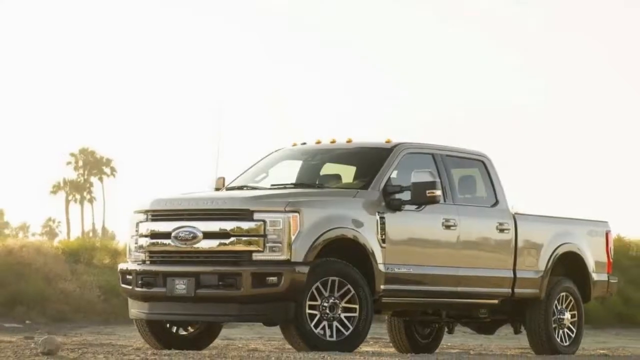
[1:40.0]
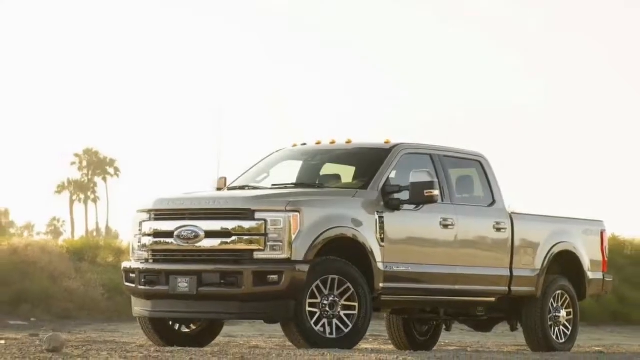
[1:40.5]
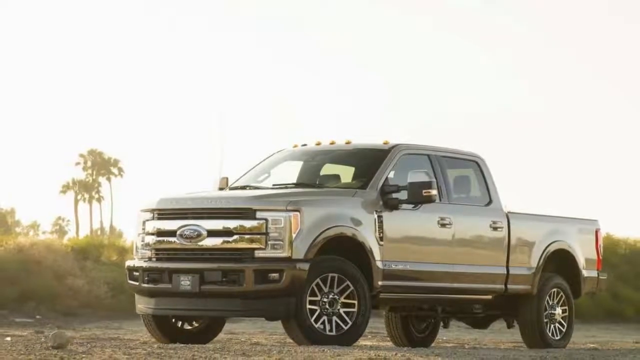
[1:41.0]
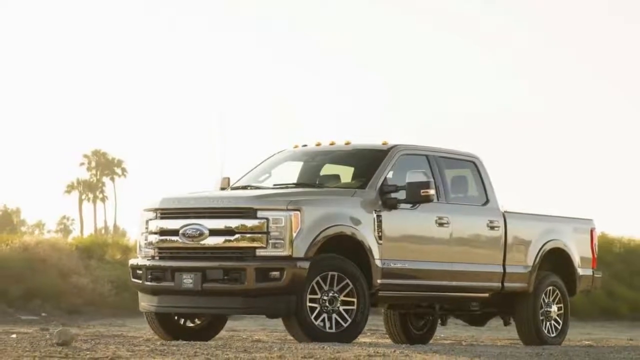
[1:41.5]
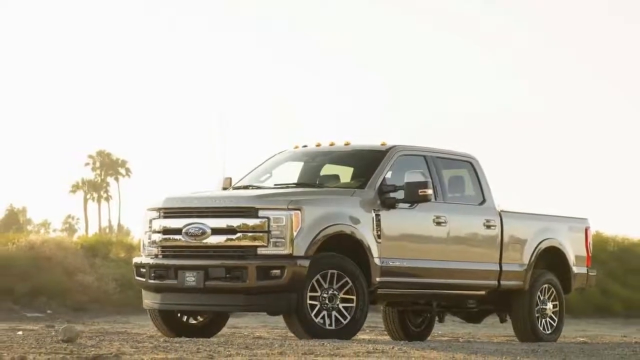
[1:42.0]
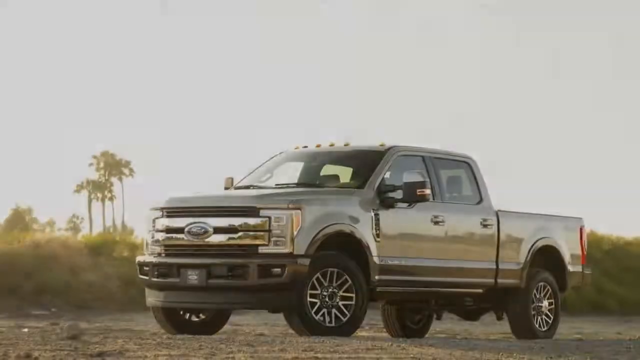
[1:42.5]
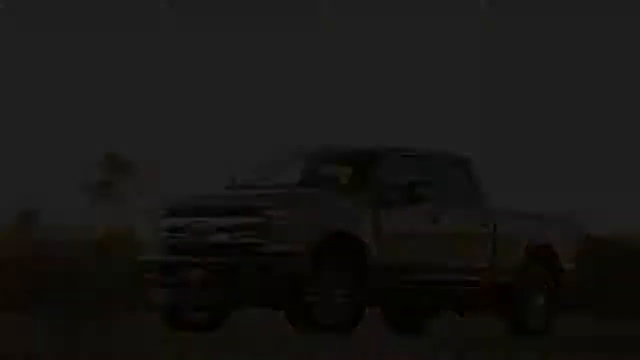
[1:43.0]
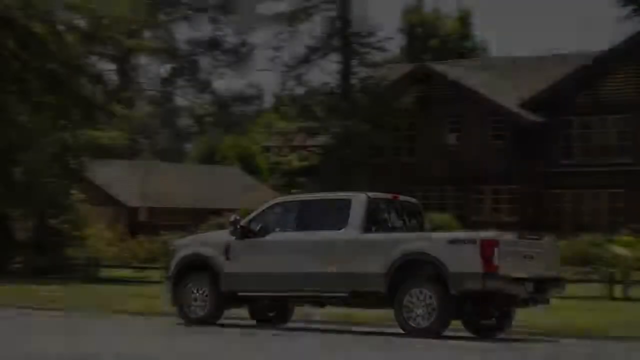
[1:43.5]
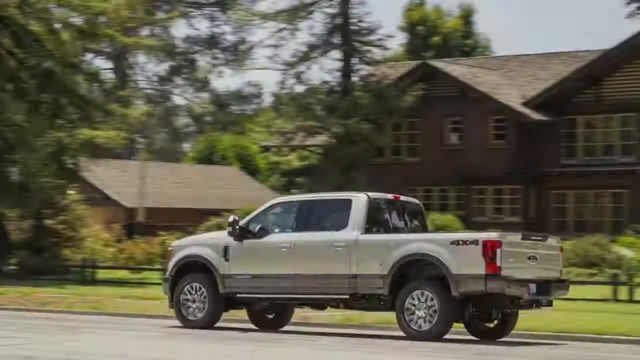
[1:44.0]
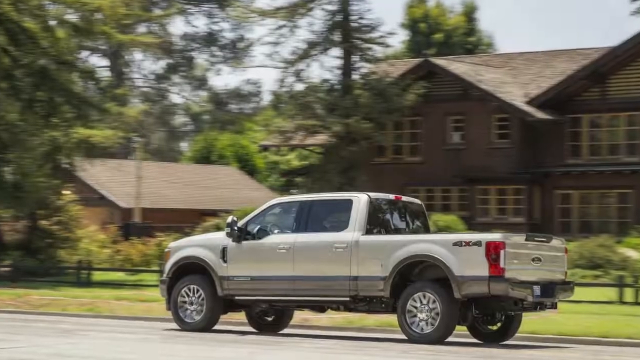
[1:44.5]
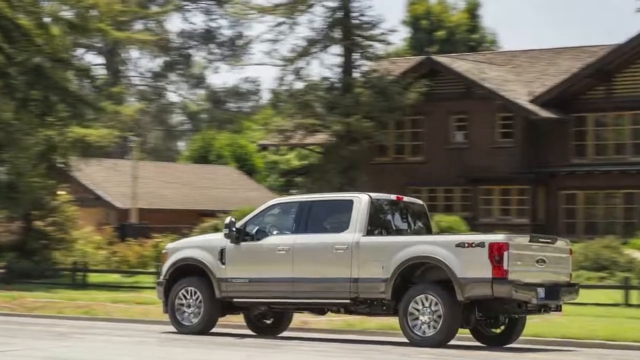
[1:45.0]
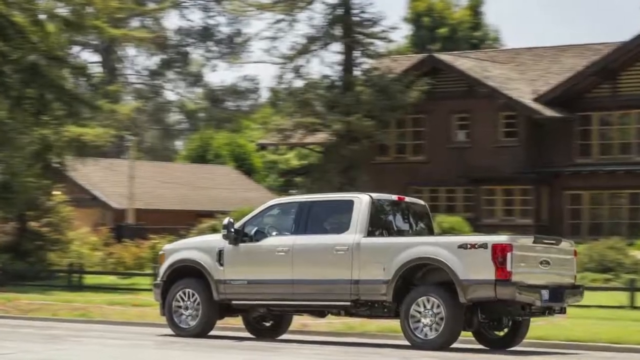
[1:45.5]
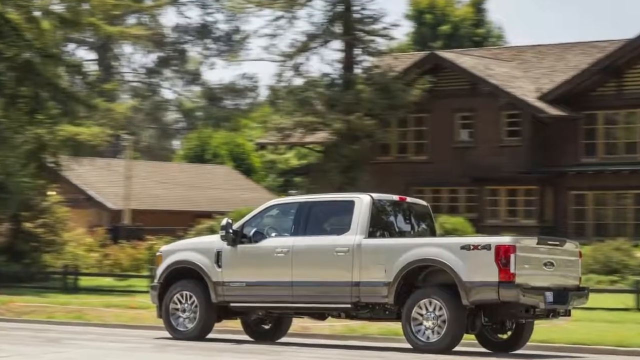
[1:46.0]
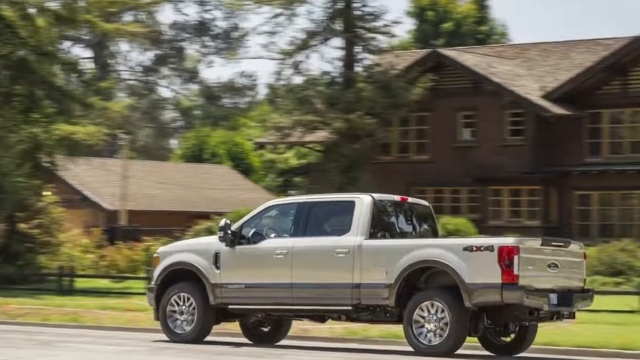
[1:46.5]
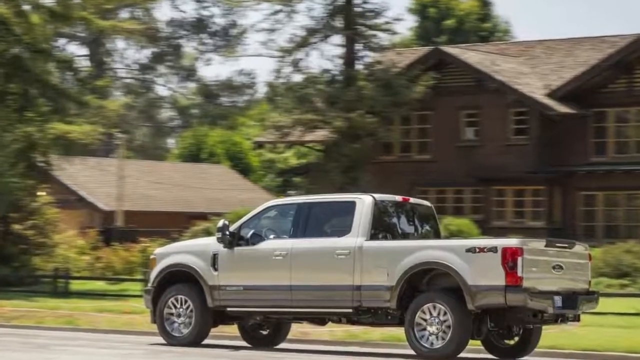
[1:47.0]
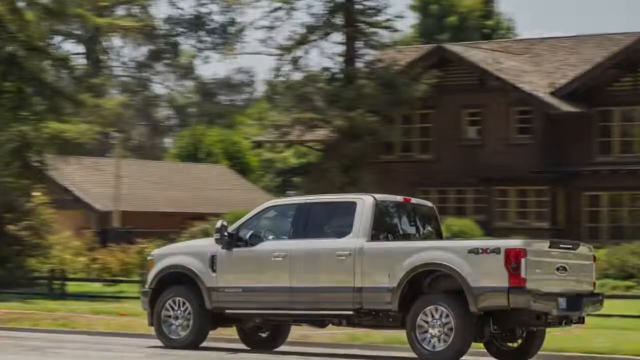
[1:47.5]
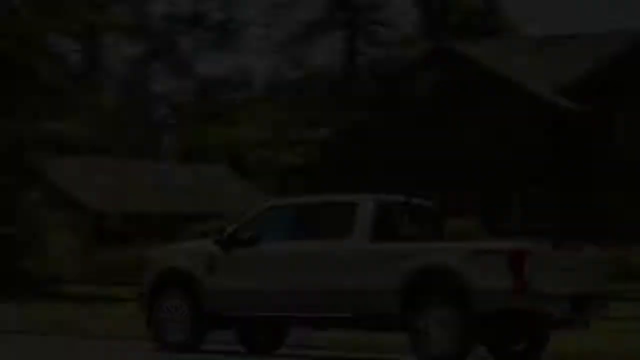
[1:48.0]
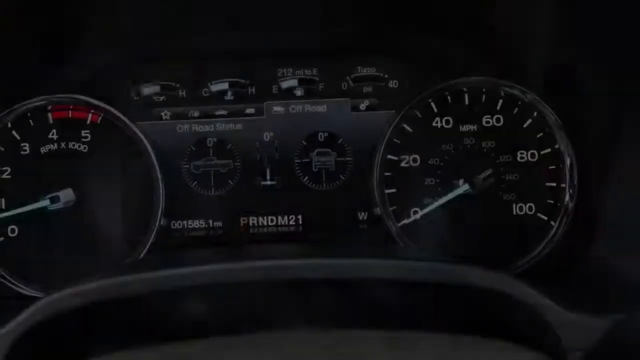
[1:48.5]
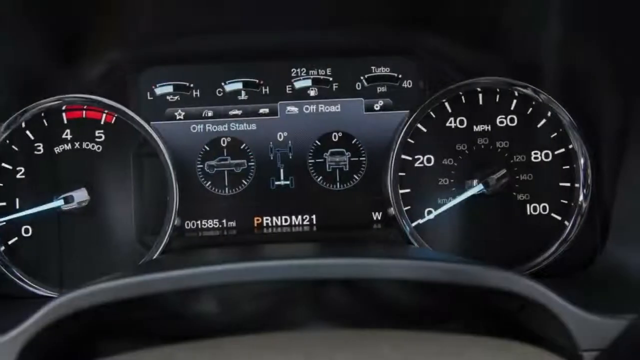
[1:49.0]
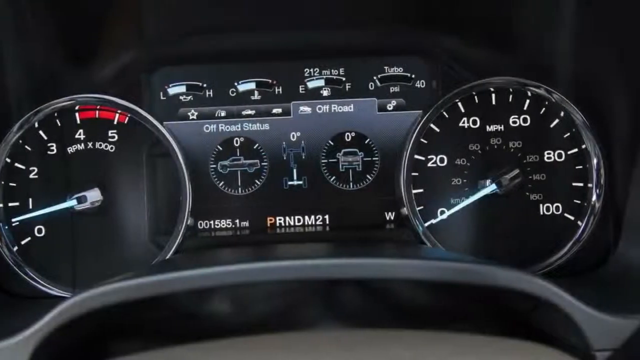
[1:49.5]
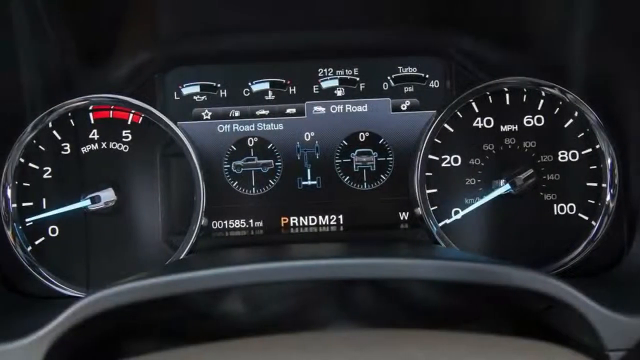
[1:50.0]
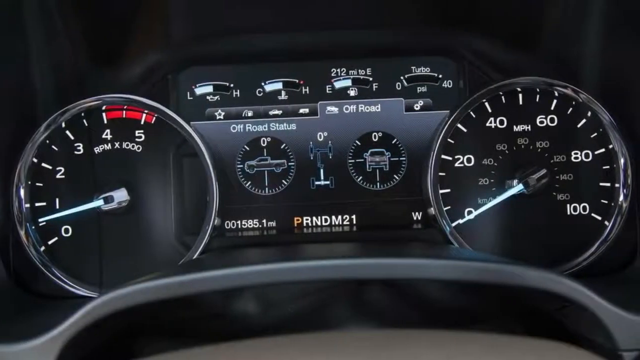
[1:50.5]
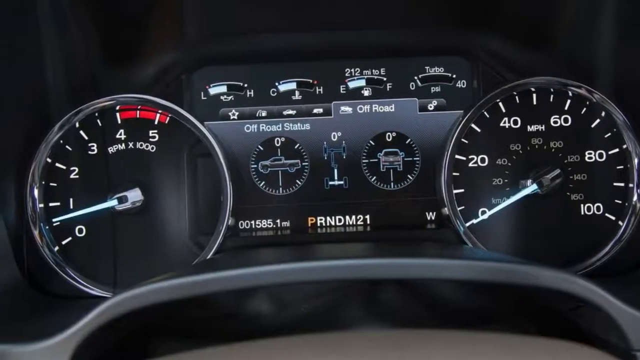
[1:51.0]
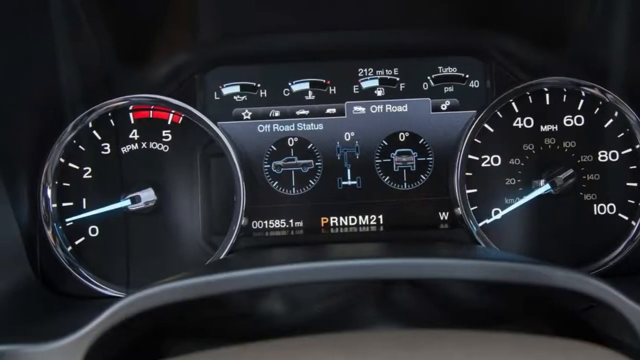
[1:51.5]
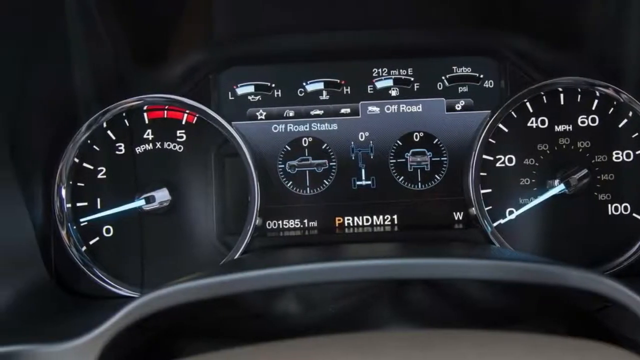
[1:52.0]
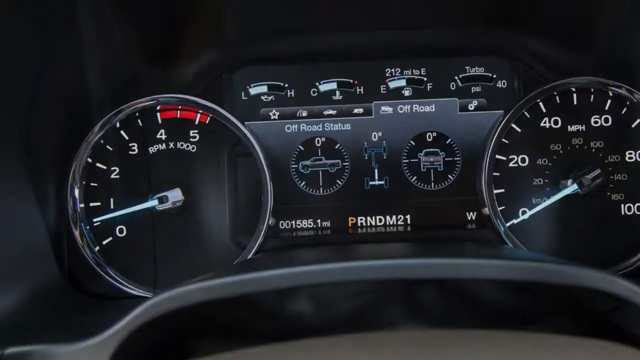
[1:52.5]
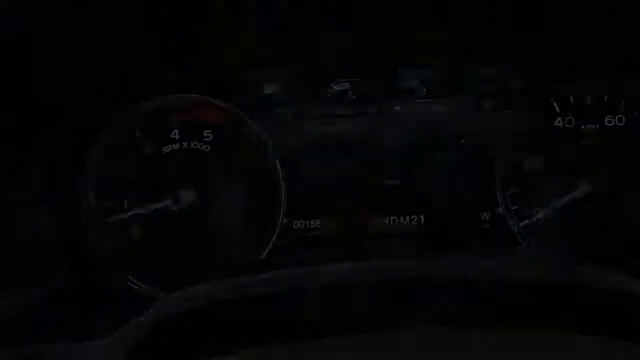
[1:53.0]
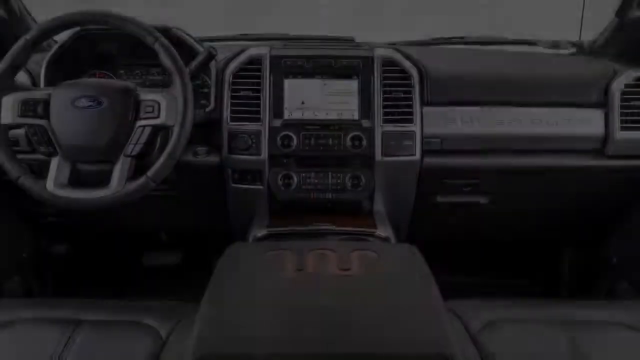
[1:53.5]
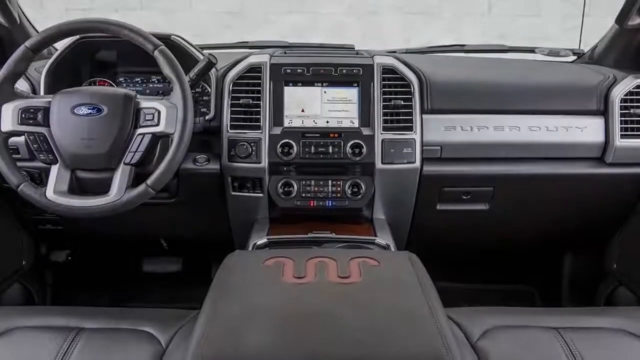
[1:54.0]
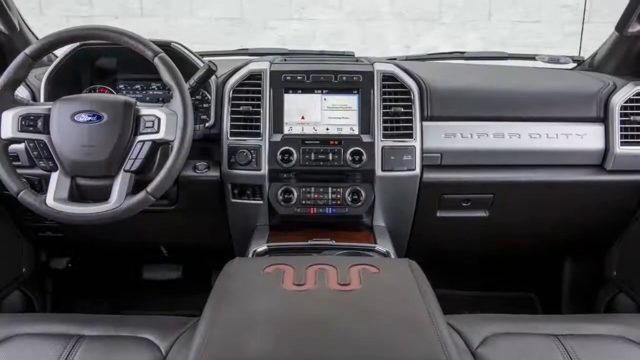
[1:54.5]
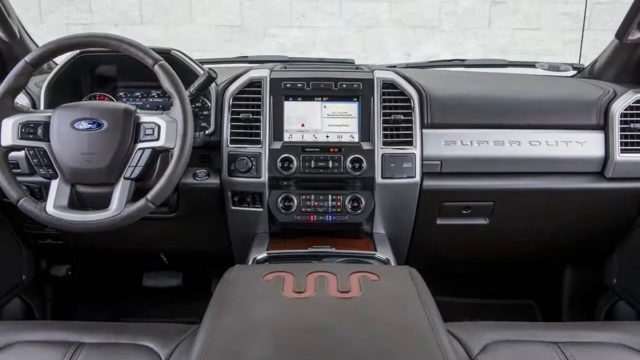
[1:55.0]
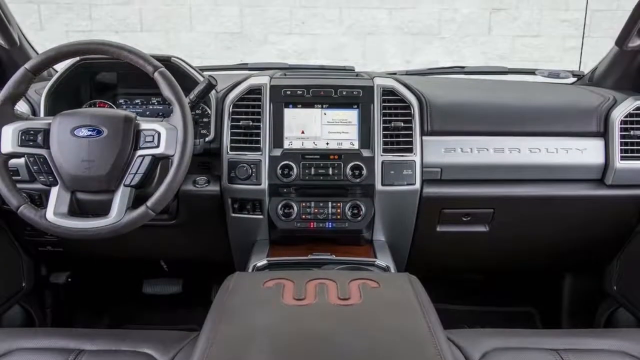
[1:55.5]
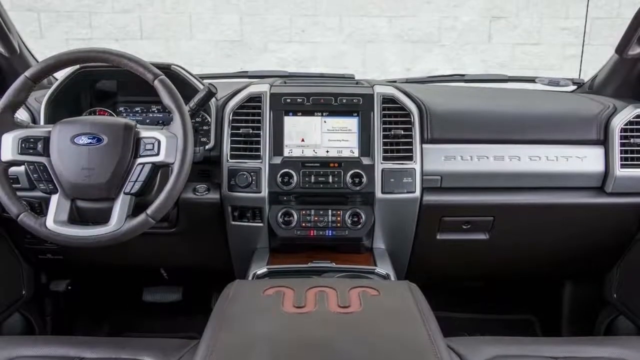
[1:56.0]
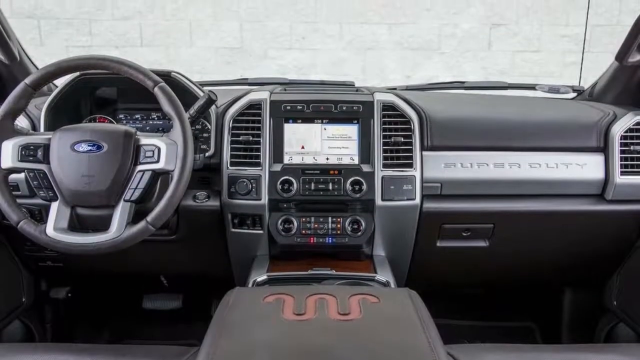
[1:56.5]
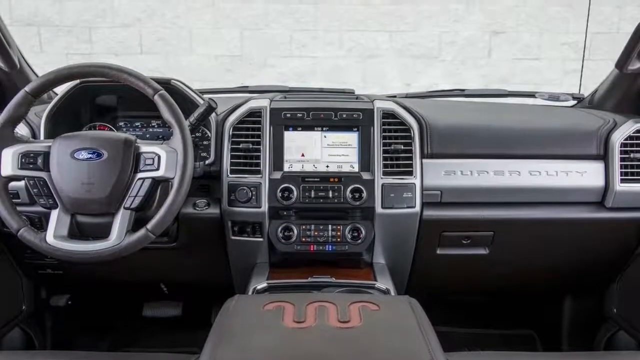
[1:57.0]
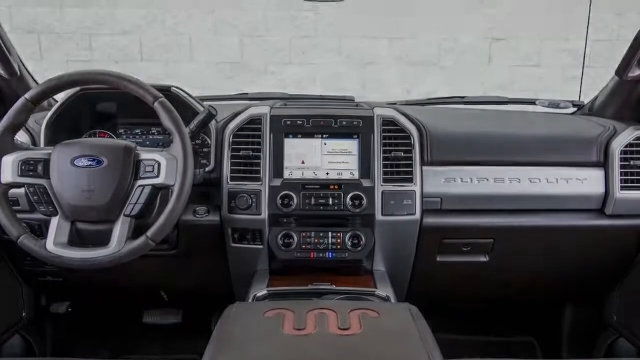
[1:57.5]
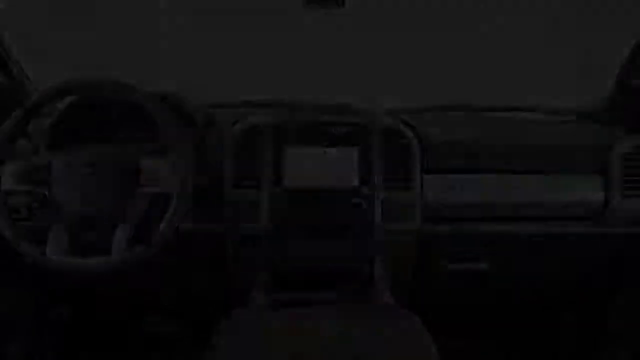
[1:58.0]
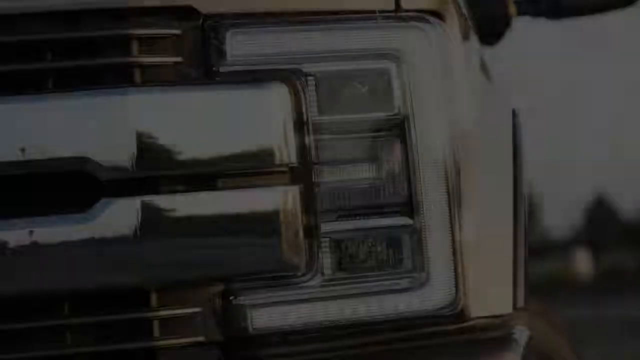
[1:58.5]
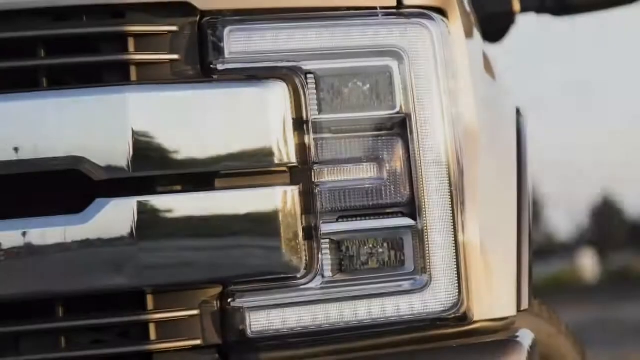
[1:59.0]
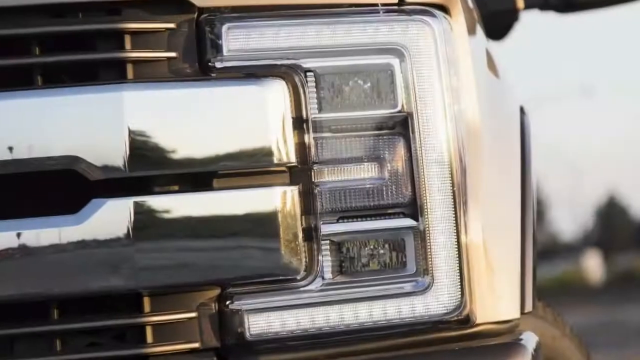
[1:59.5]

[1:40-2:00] A grey pickup truck with two doors on the driver's side is in front of some trees and woodland. The same vehicle is then shown in a photograph, appearing to drive facing left in front of a large brown house with large white windows and a garden, with a fence behind the truck. The view zooms in slightly, showing TX4X4 on the rear of the truck, a red light cluster, a dropping tailgate, and a red light on the outside of the vehicle above the rear windscreen. Next comes the instrument cluster with the speedometer and odometer. On the left is a rev meter going from 0 to 5, with 4 and 5 indicated in red against a red swoop in the background. A speedometer goes from 0 to 100 miles per hour, and inside it, in smaller grey characters, are speeds from 0 to 180 kilometres per hour. There is an oil temperature warning light or oil warning light, an engine temperature warning light, a fuel gauge and a turbo gauge. A tab shows off-road status, with two pictures of the truck, one side-on and one face-on, and a diagram of the truck's transmission. Along the bottom, an indicator shows which of the gears P, R, N, D, M, 2 and 1 the vehicle is in, with the overall mileage to its left. The image scrolls from left to right, then an image of the center console of the vehicle appears again, scrolling upwards toward the lights.